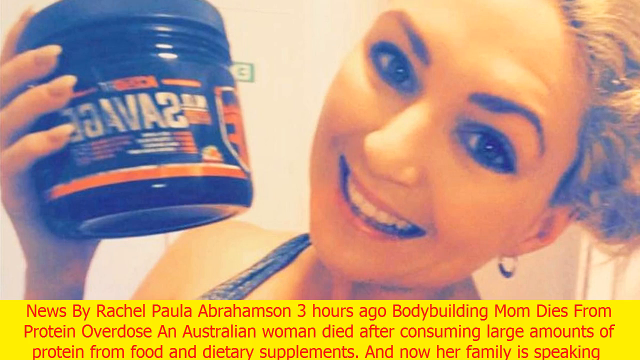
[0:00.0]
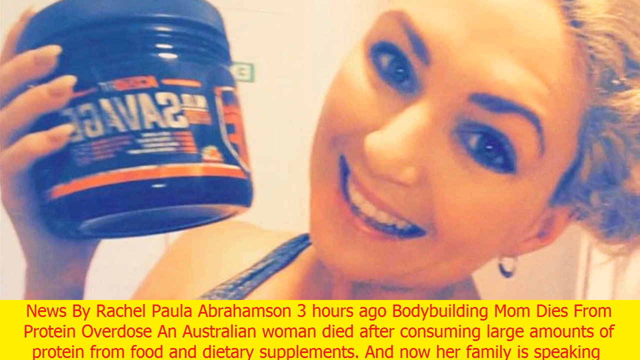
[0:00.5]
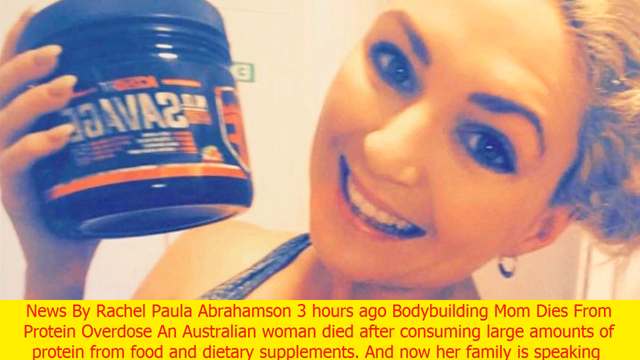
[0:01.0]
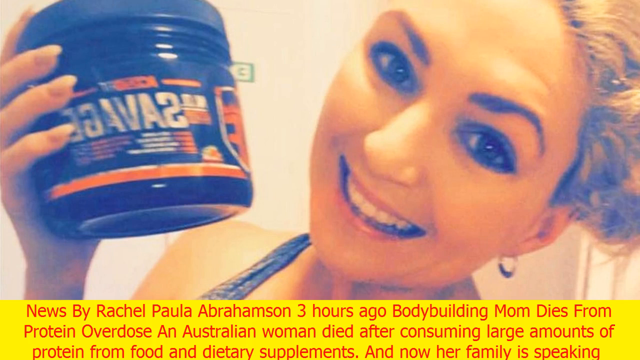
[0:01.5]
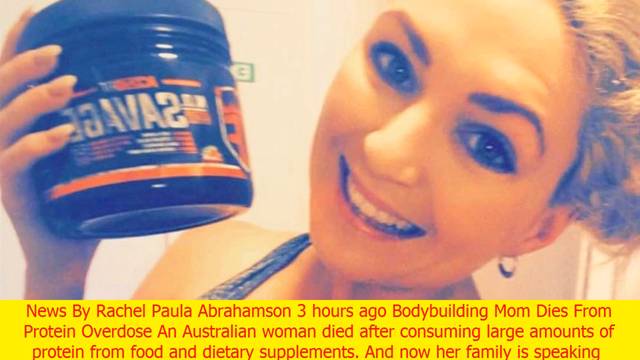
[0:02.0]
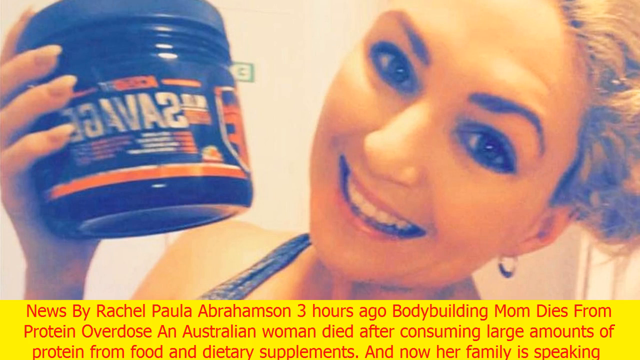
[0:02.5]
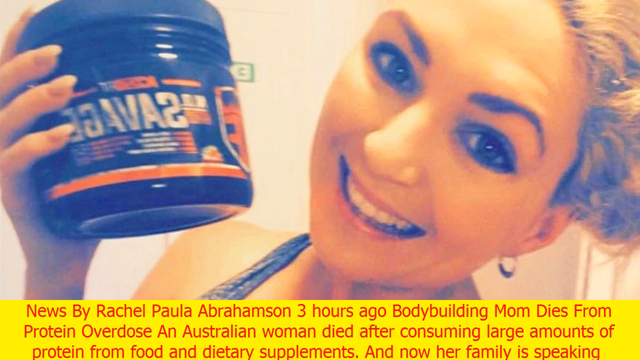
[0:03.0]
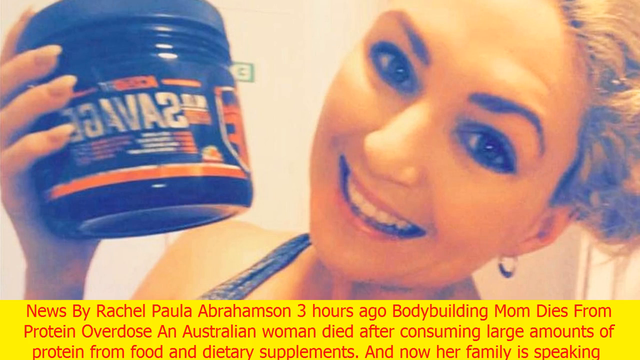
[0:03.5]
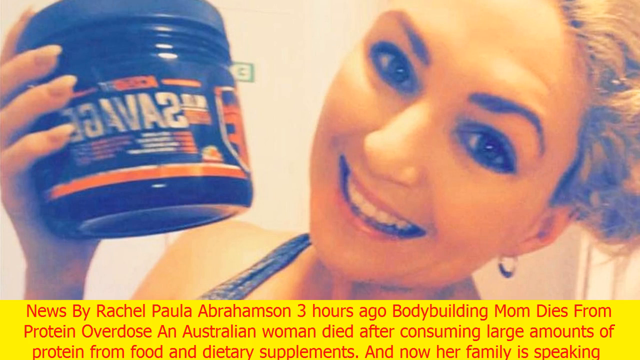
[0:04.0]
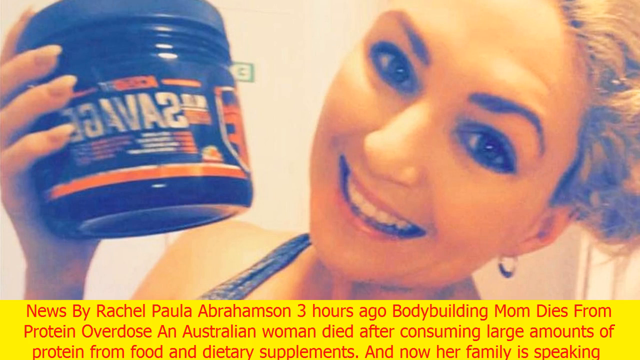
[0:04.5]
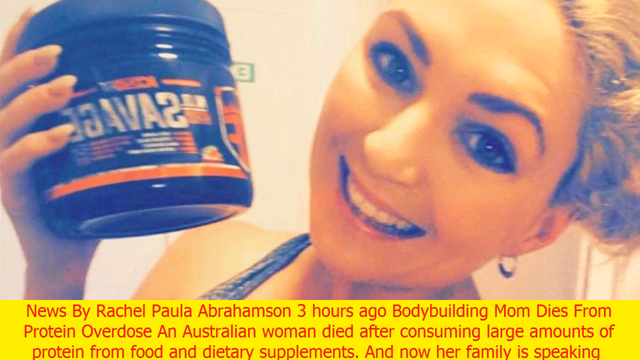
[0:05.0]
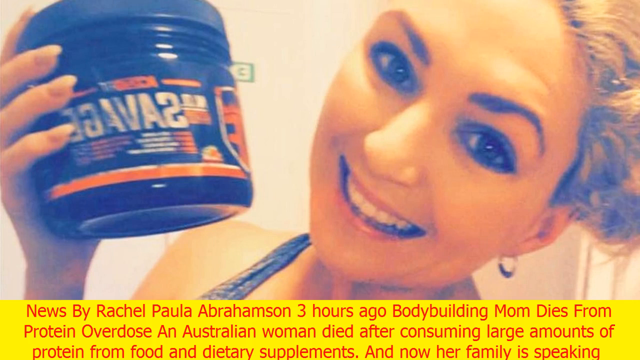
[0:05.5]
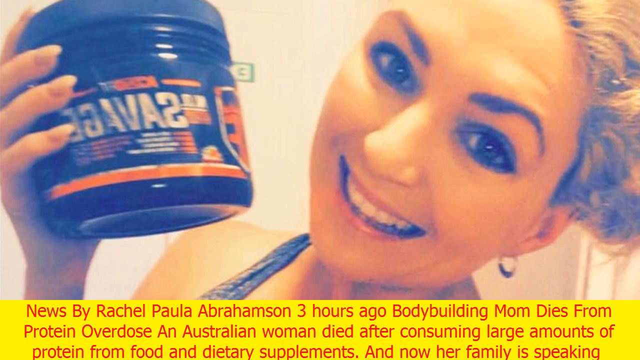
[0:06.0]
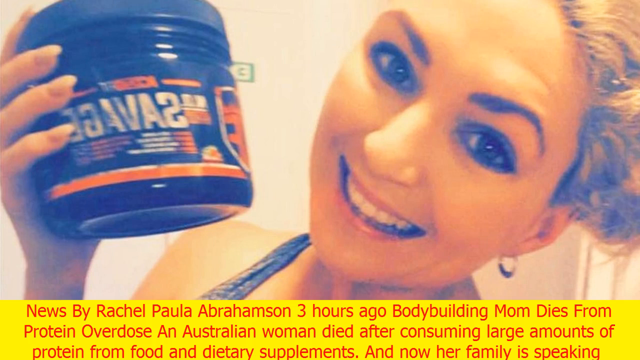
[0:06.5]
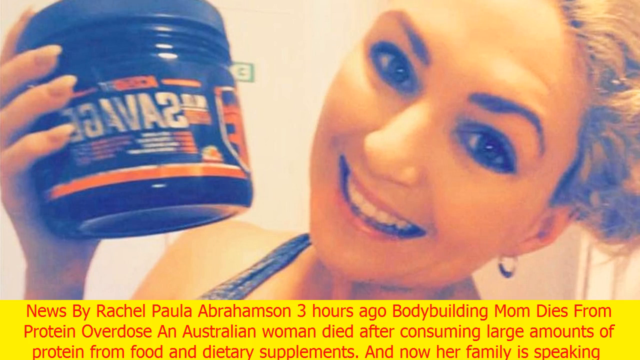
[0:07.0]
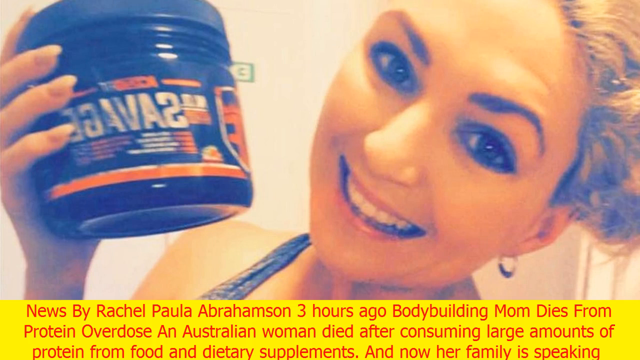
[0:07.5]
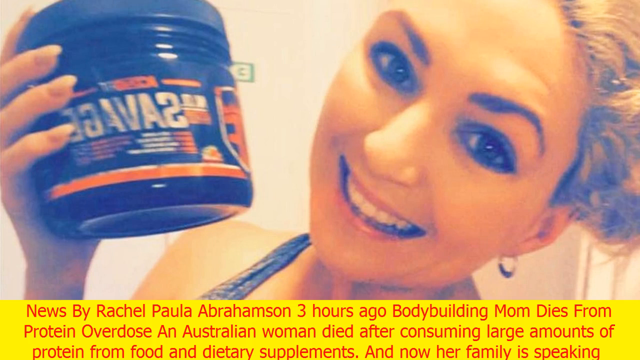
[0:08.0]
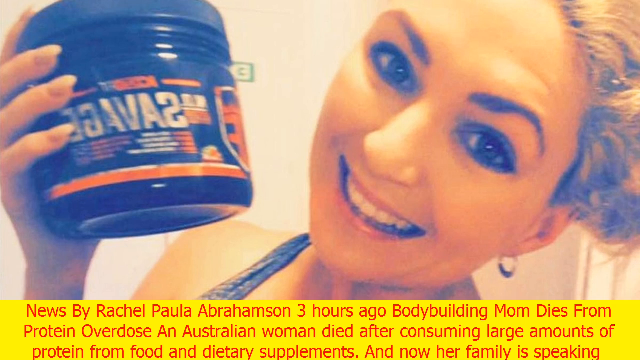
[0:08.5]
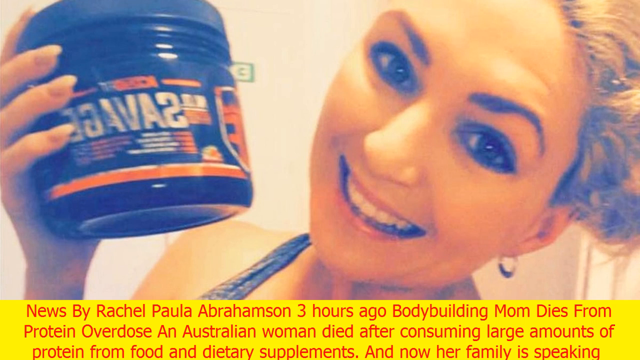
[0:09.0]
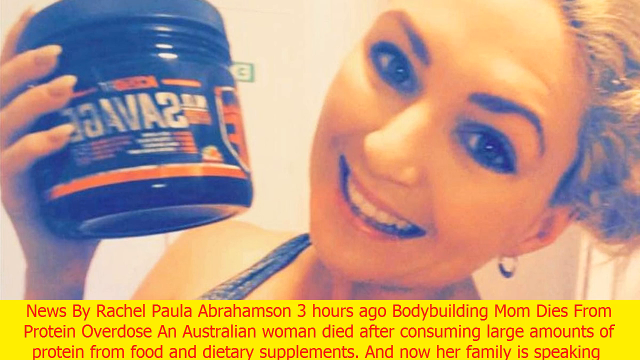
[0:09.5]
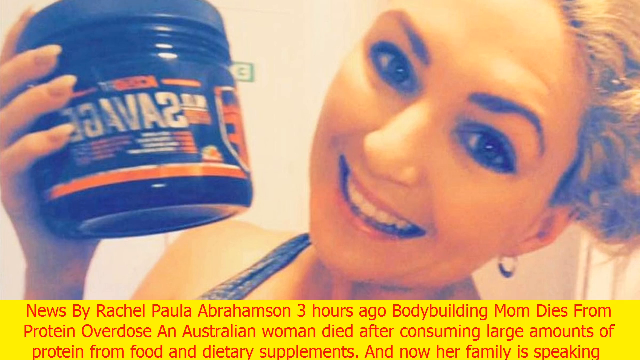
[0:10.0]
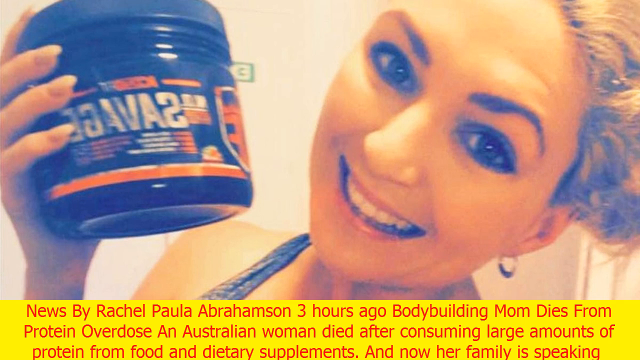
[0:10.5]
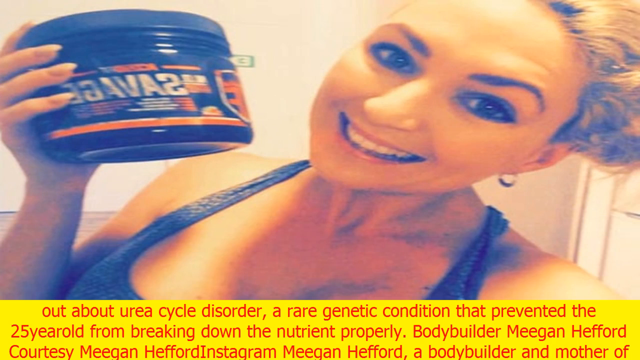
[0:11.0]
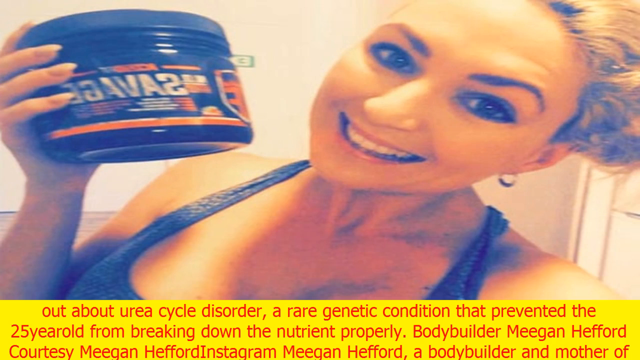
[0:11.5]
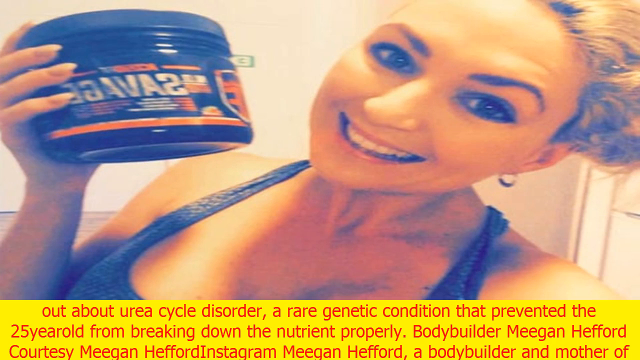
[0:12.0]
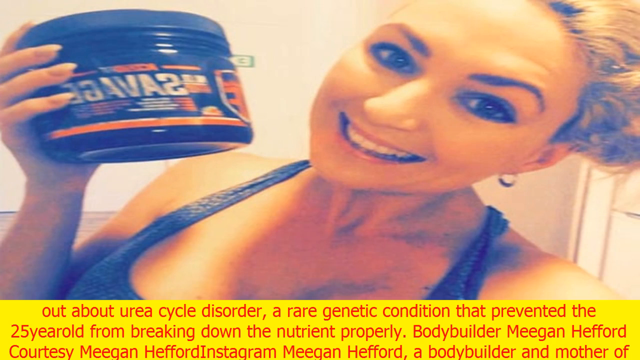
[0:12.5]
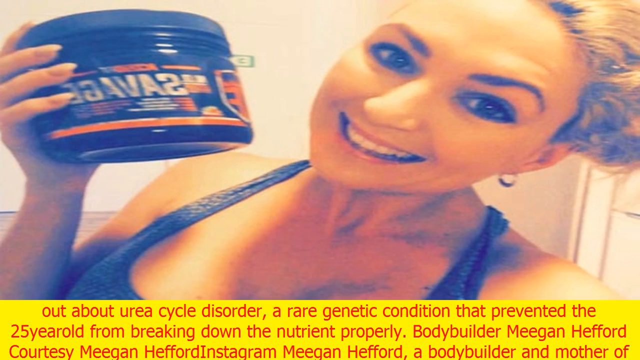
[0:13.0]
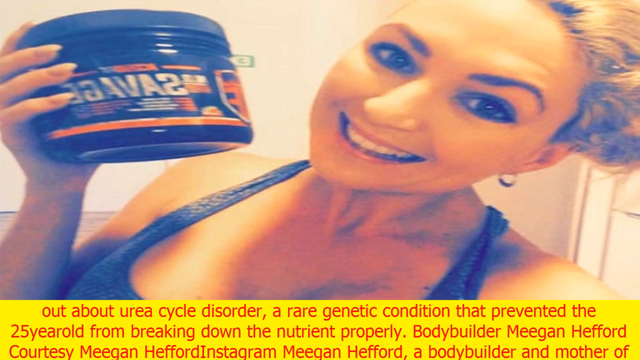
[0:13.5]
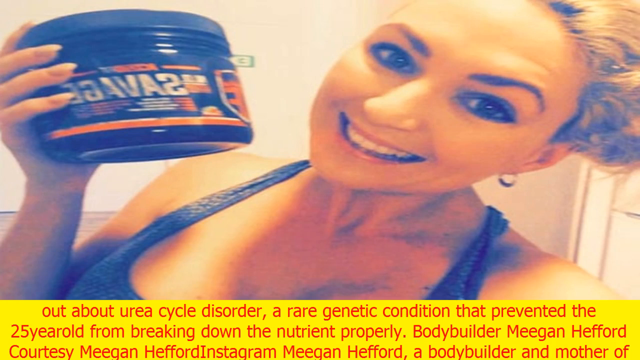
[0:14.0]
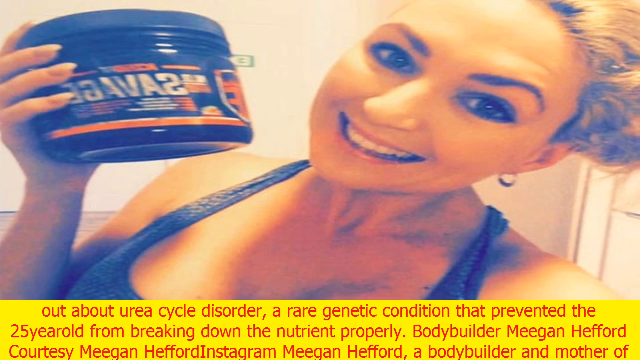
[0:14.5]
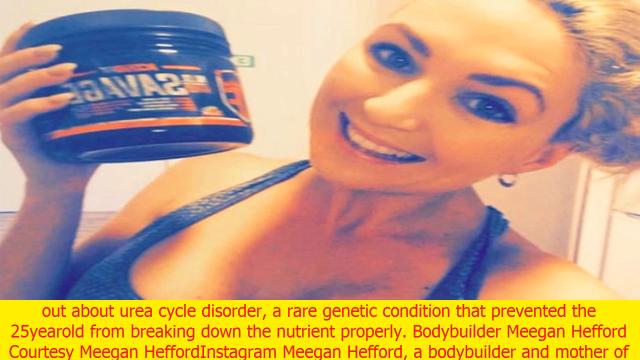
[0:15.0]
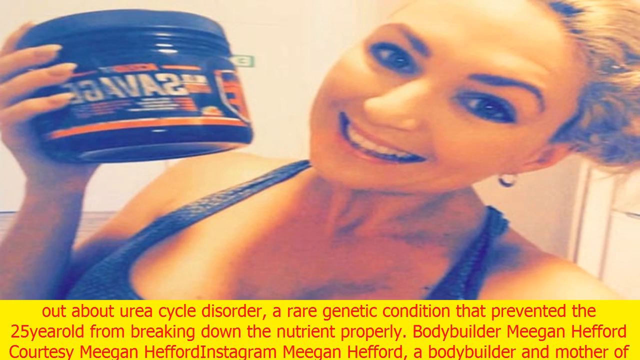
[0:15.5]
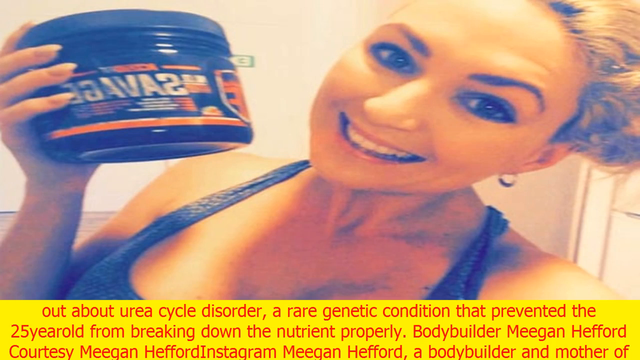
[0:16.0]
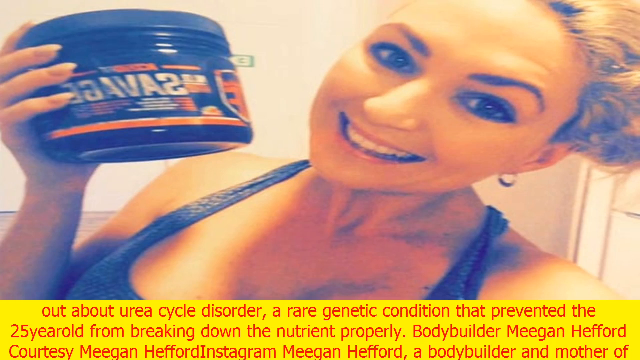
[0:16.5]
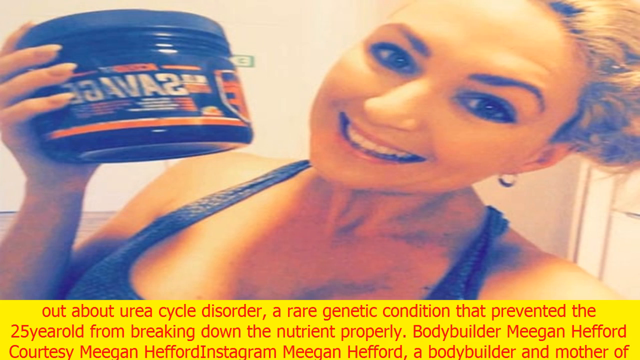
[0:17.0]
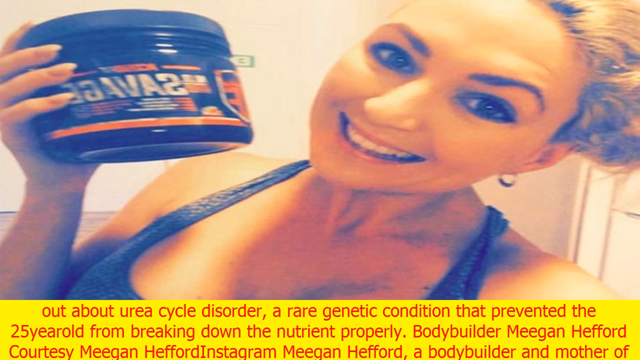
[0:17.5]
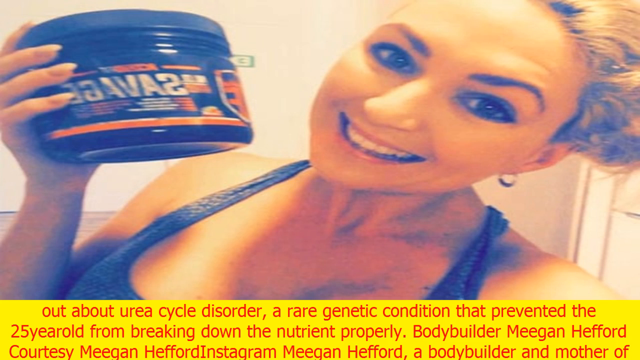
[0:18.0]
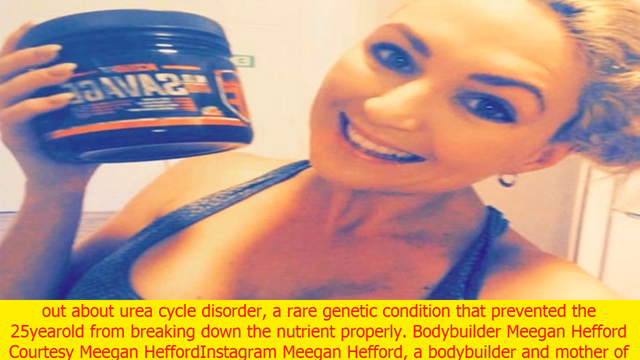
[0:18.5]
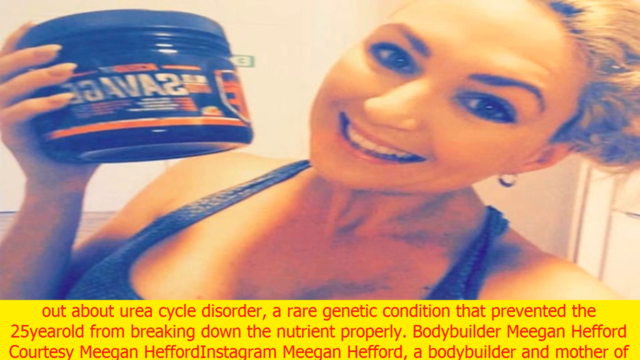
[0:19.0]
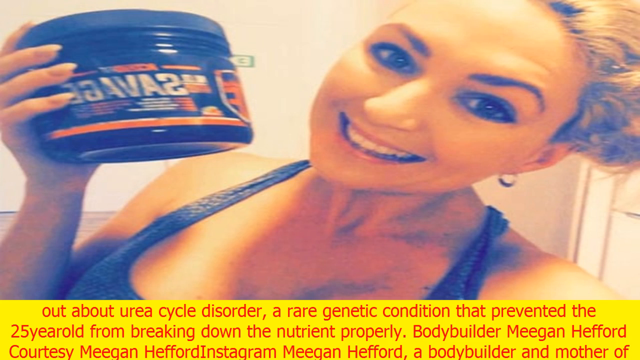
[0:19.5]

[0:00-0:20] The video opens with an image of a woman holding some protein. She is blonde and white and wears a workout outfit. Her story is that of a bodybuilder mother in Australia, Rachel Paul Abramson, who died of a protein overdose. The video goes on to explain that she had a problem with the urea cycle, a very rare genetic condition, which could be why she died of the protein overdose.